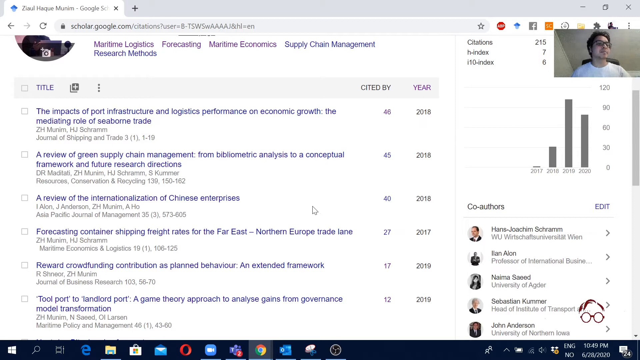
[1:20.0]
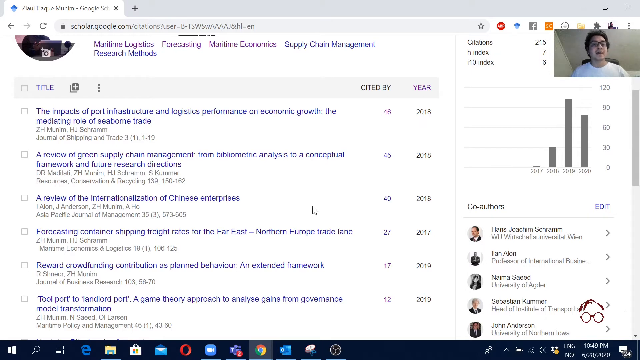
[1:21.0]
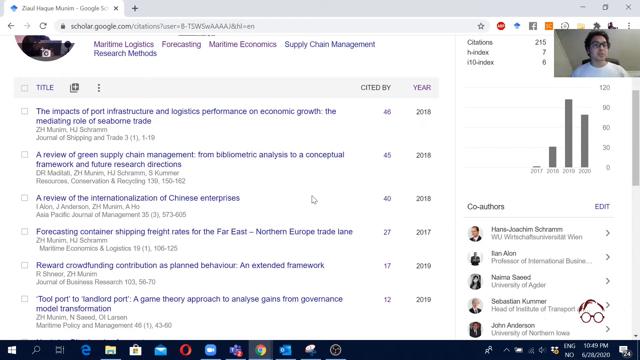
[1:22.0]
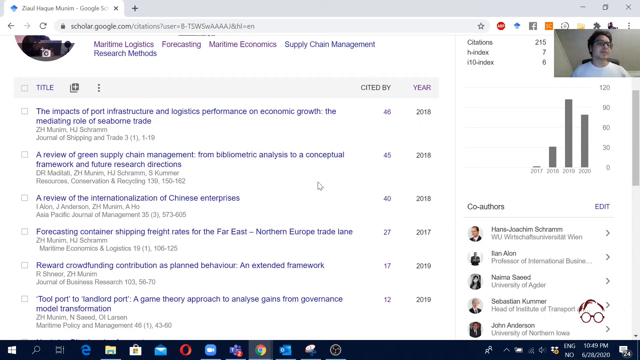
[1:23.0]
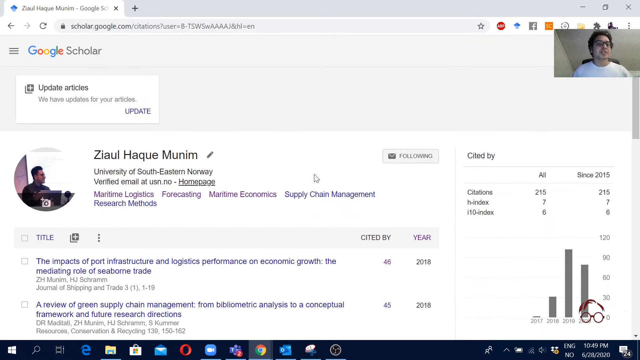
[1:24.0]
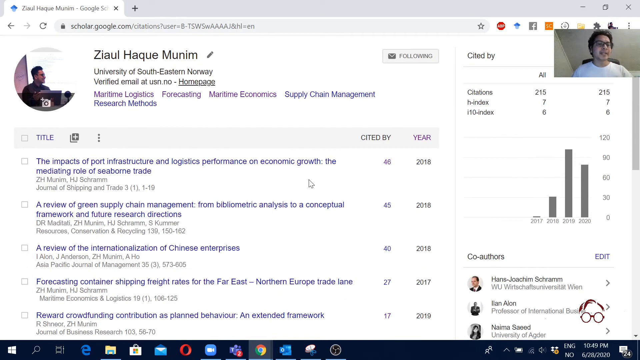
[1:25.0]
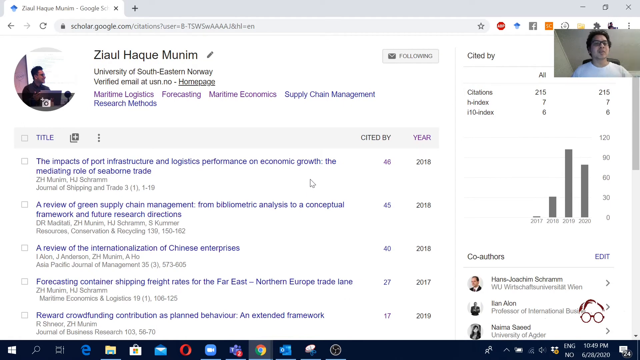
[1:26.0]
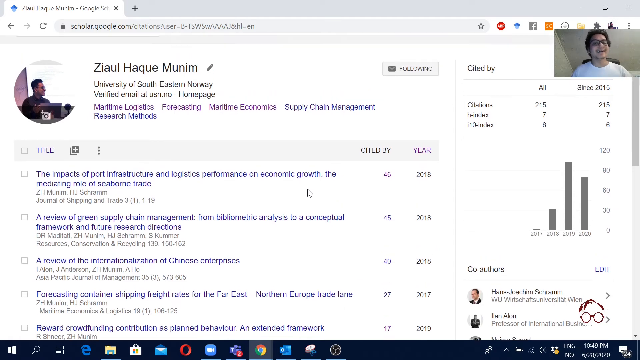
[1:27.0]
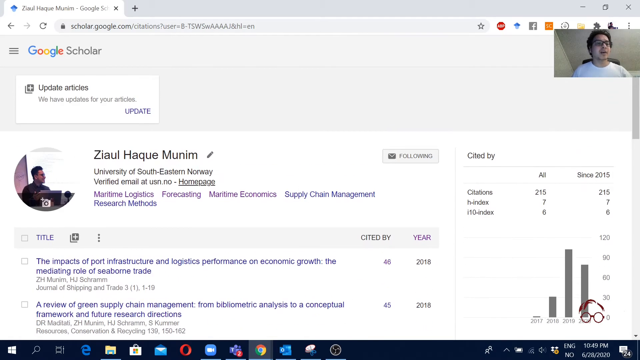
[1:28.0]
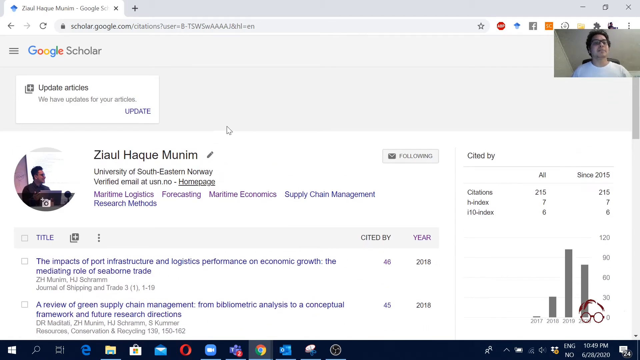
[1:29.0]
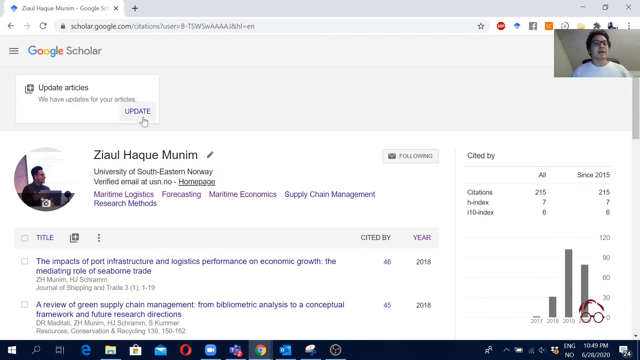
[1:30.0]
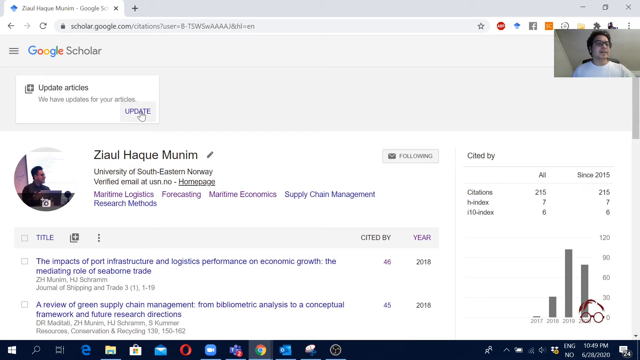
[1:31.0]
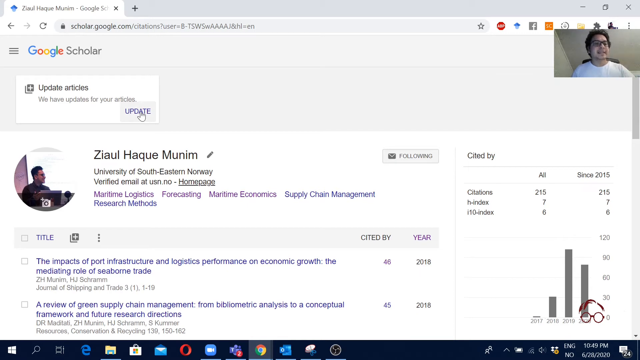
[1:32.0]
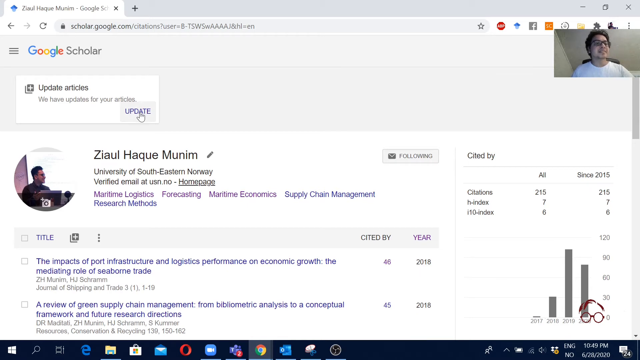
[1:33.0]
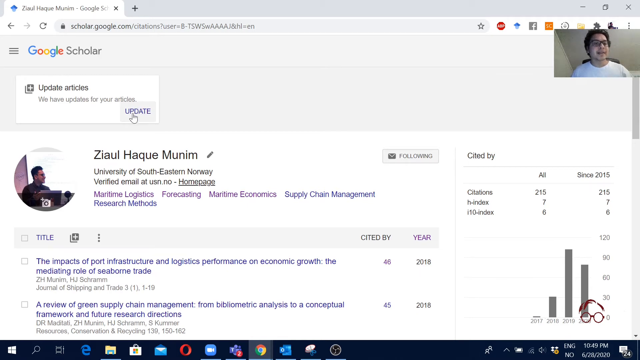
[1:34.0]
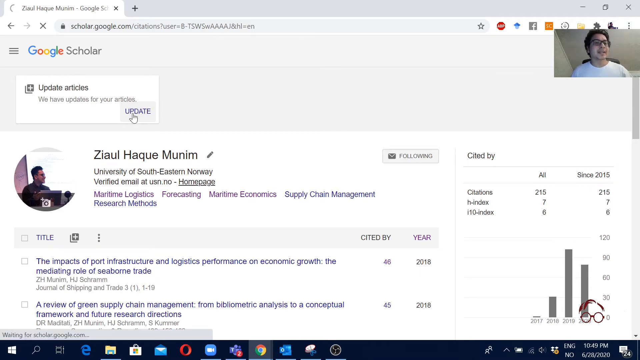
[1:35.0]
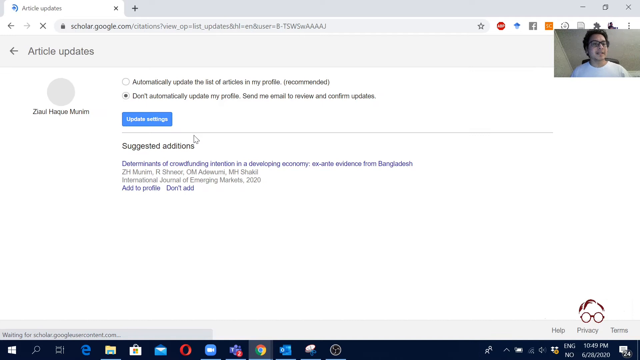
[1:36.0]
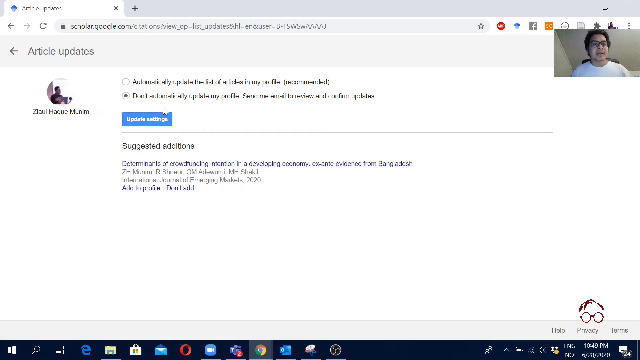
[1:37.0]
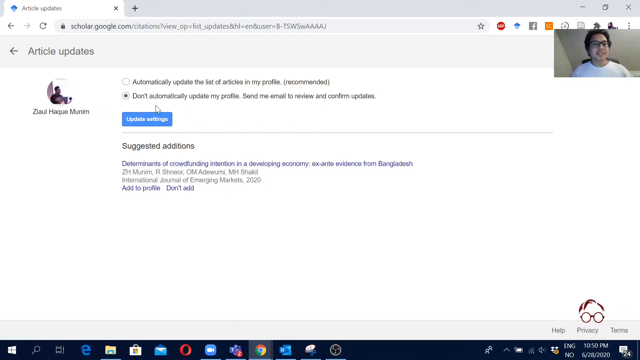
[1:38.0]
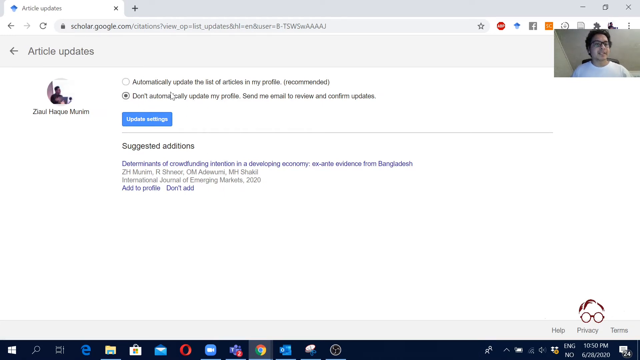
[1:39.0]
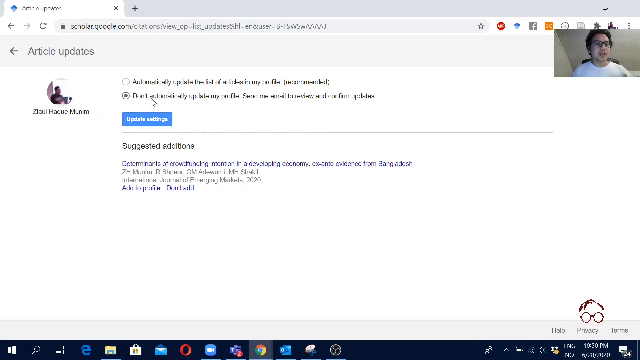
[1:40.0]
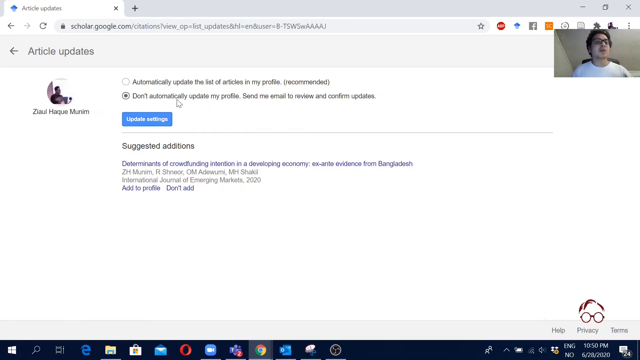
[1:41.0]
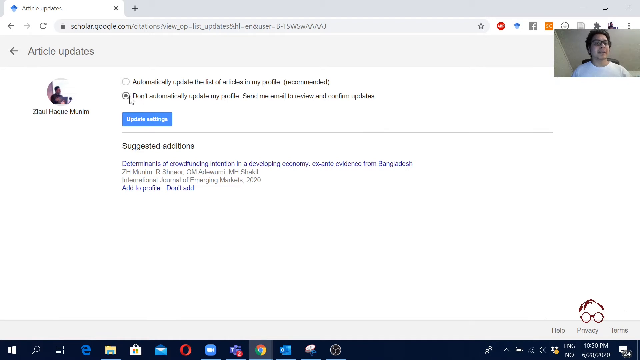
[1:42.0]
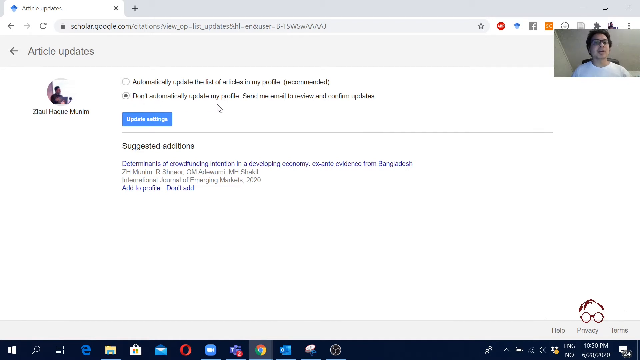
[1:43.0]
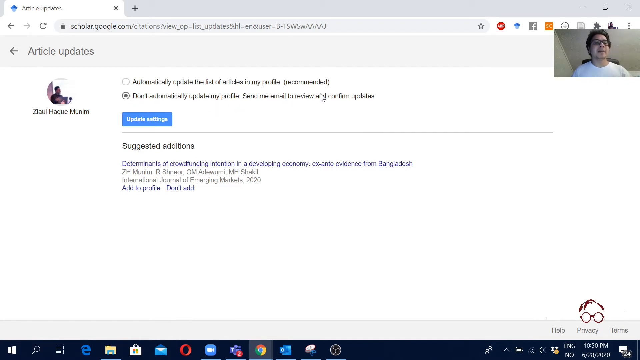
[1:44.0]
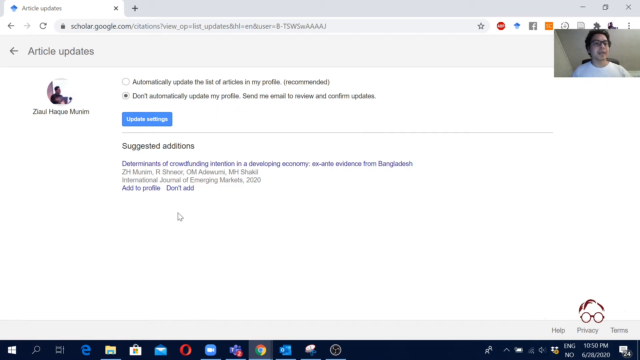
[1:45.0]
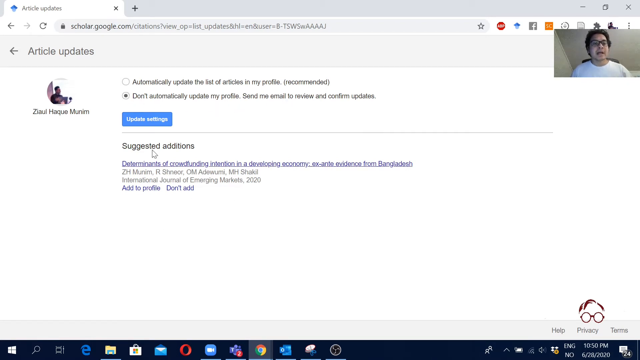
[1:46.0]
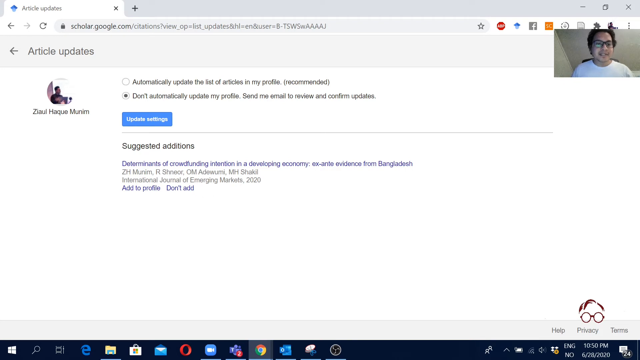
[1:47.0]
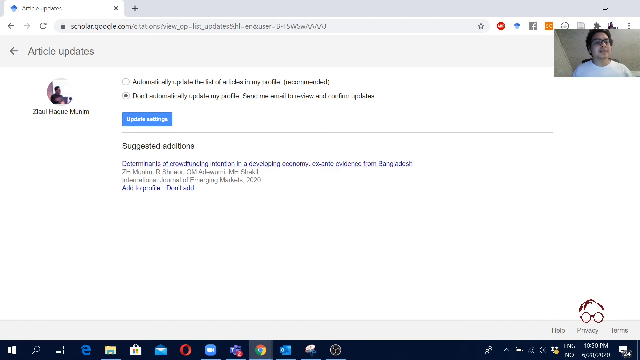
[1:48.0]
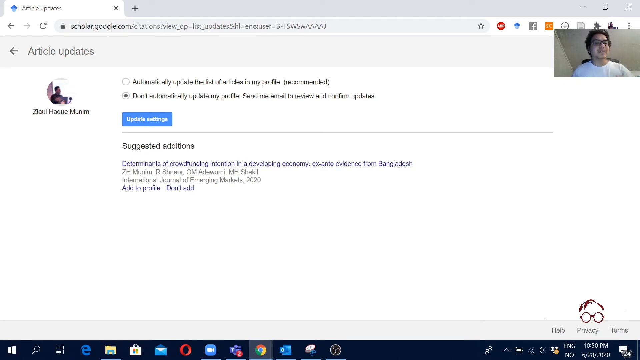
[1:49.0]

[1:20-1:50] A man does a tutorial on his computer, with his picture in the top right corner. As he talks, he moves the cursor in the main portion of the video and clicks on "update" under "update articles". A page comes up showing his profile picture and the option "don't automatically update my profile and send me an email to review and confirm updates". He quickly makes circles with the cursor in two different places on the screen, clockwise both times, to draw attention to those areas, but does not click by the end. The top option, which is not marked, says "automatically update the list of articles in my profile" and also says "recommended".